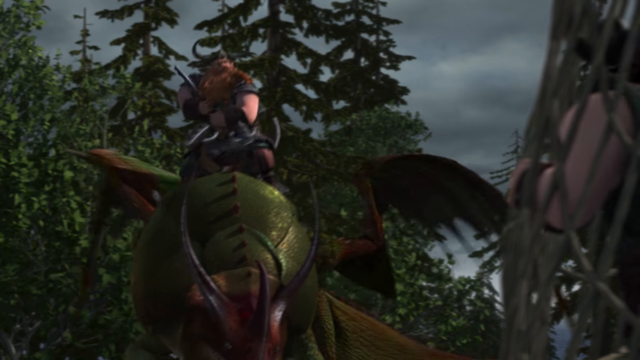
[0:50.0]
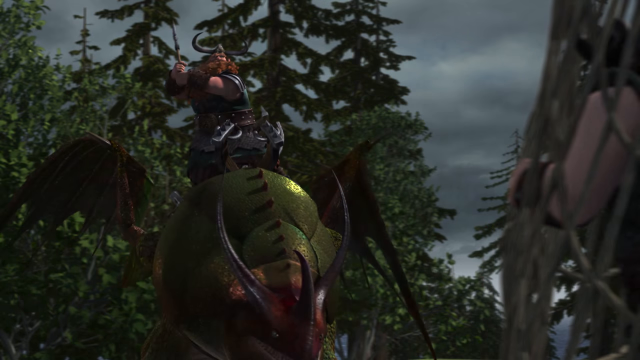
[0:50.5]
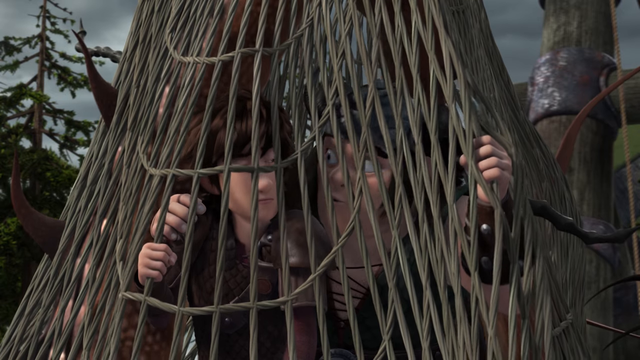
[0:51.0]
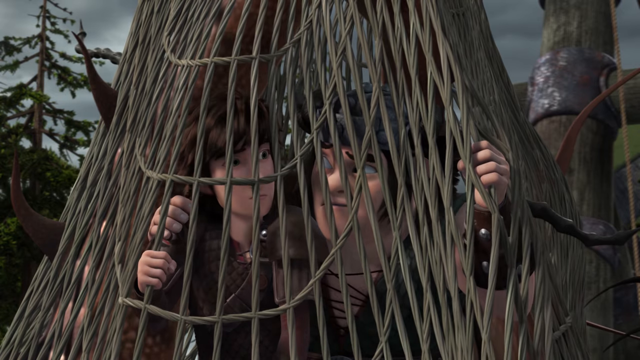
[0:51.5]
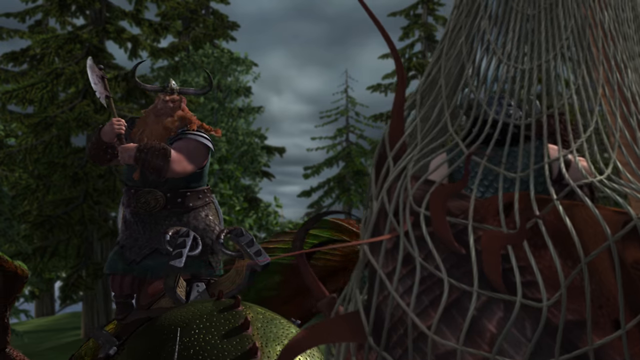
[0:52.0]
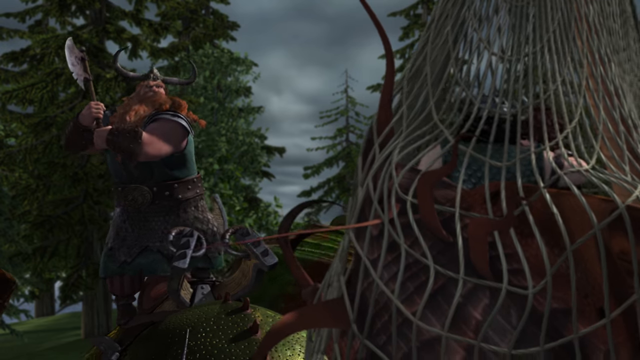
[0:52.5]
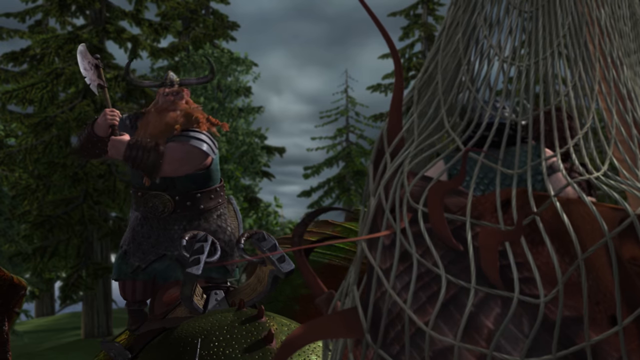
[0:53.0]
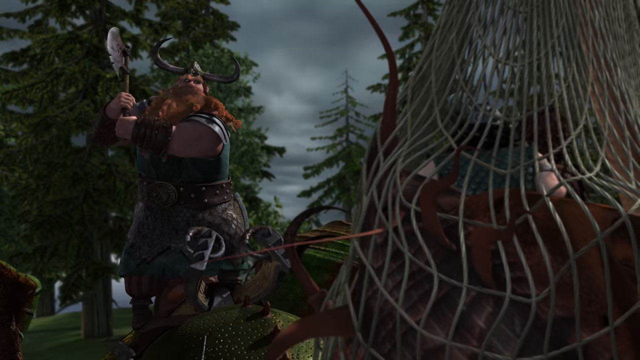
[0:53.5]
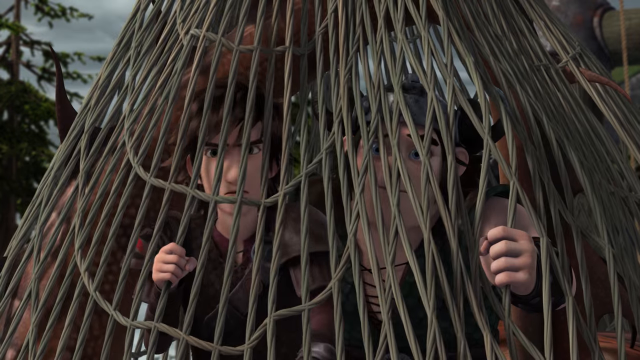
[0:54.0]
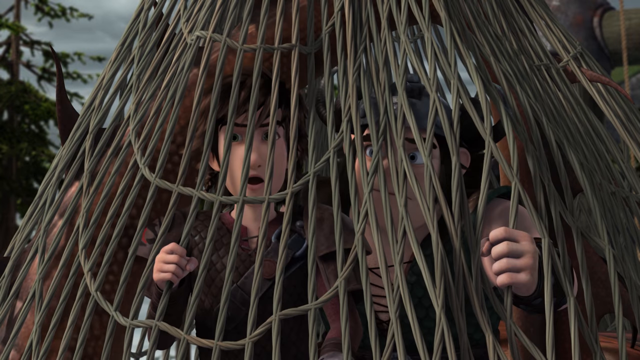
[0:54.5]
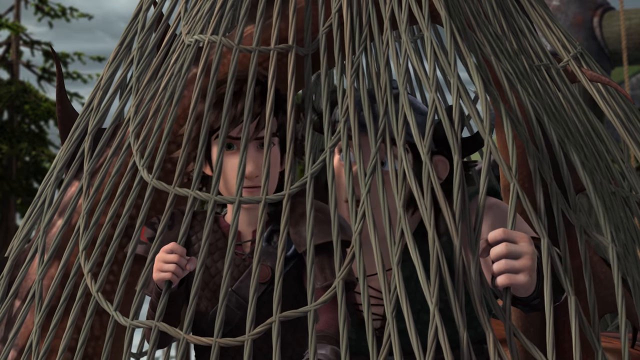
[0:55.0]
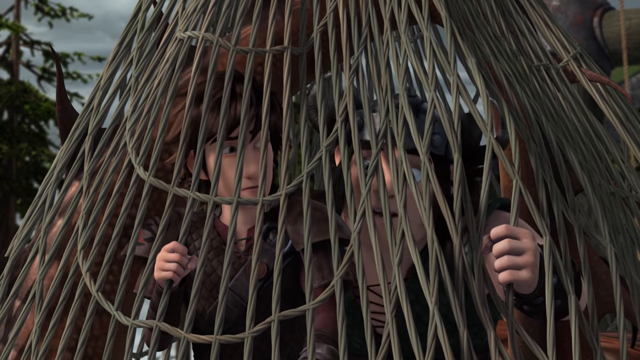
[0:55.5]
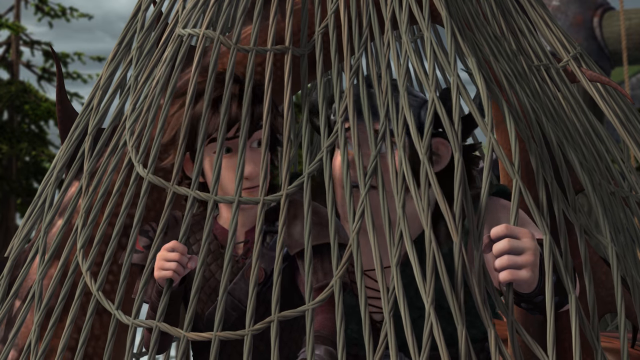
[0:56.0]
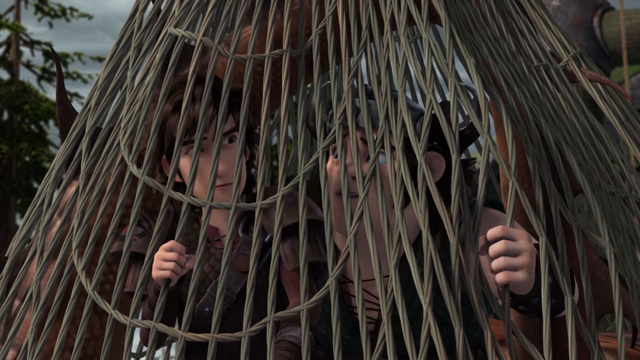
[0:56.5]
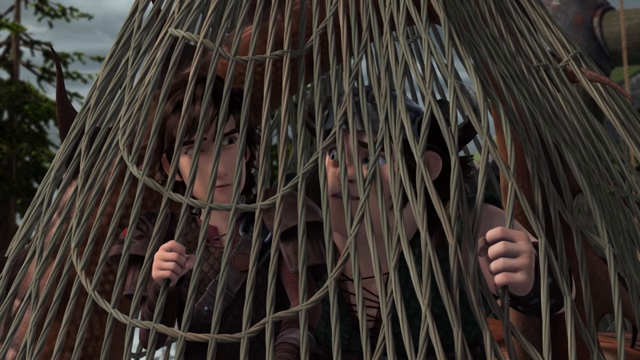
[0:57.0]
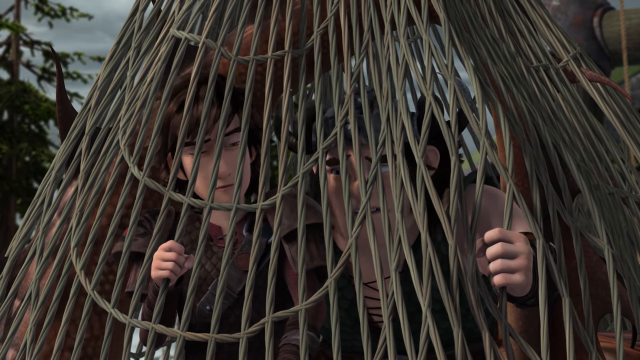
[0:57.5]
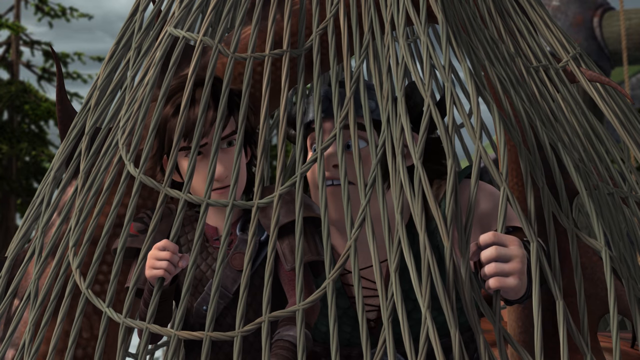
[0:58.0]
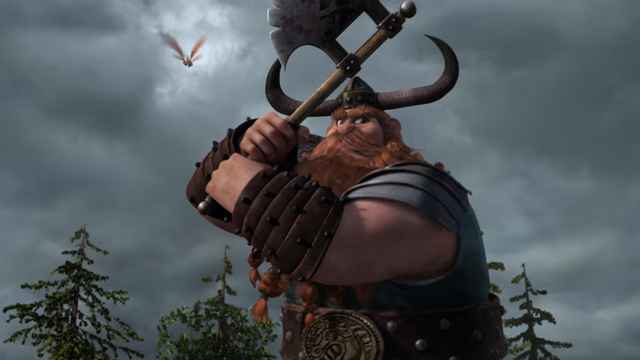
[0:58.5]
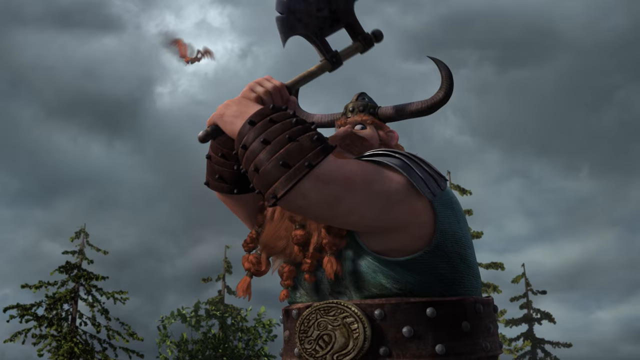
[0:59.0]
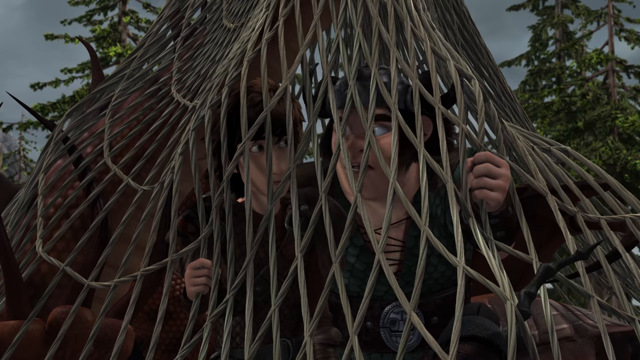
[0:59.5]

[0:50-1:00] The Viking riding the dragon has landed. The whole scene seems to take place in a wooded area, with high trees in the background. The view focuses in on the two characters in the net, who are speaking. The Viking now has an axe in his hands and is still sitting atop the dragon, while the two characters in the net speak to each other and to him. He pulls the axe back as if about to swing it, and the orange dragon can be made out in the distance, as if it is flying back to this area.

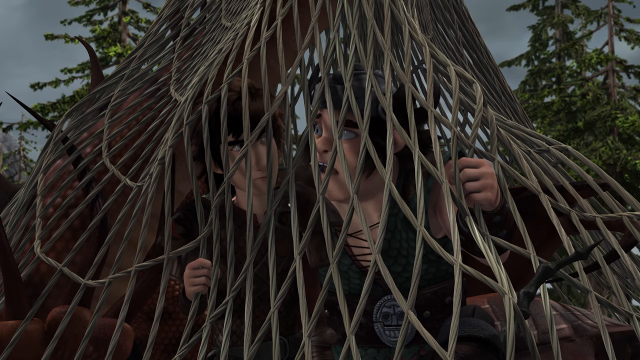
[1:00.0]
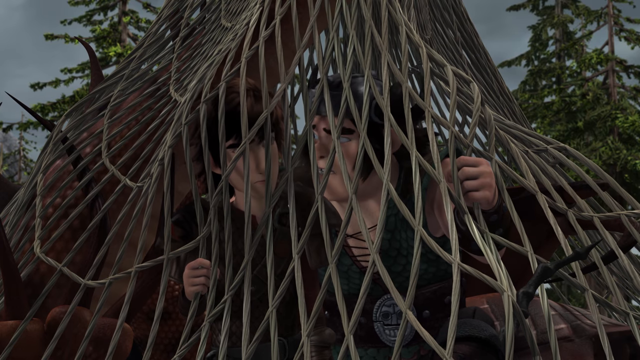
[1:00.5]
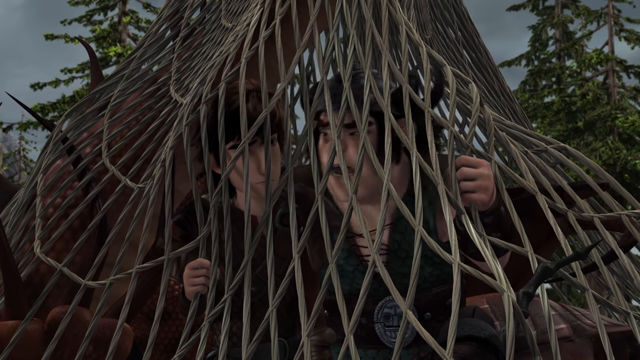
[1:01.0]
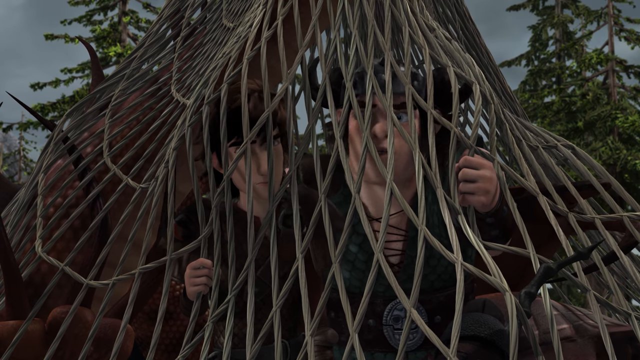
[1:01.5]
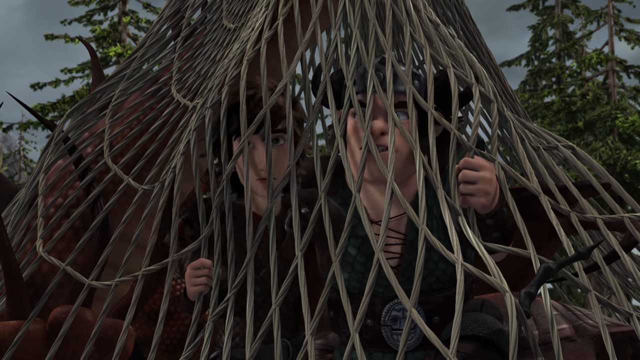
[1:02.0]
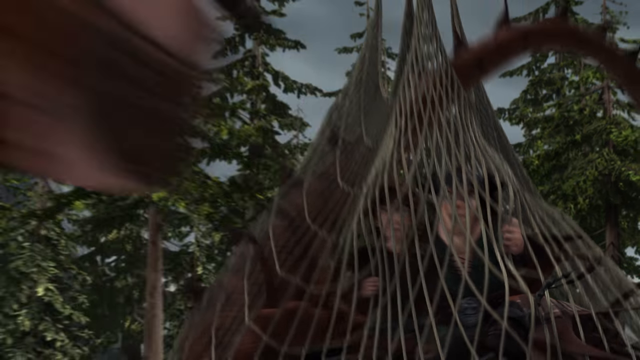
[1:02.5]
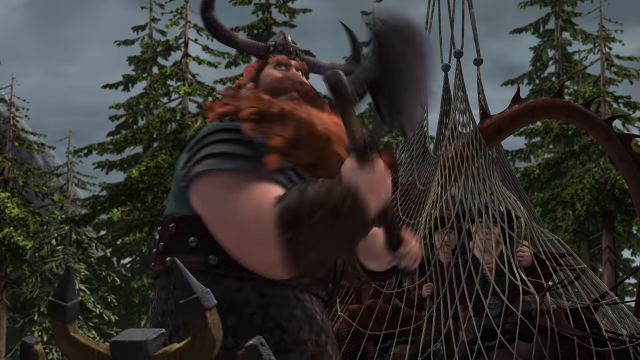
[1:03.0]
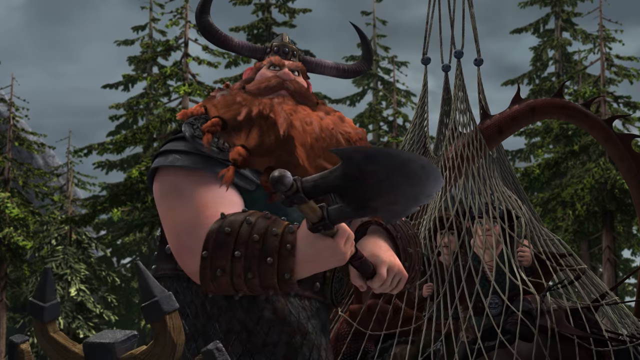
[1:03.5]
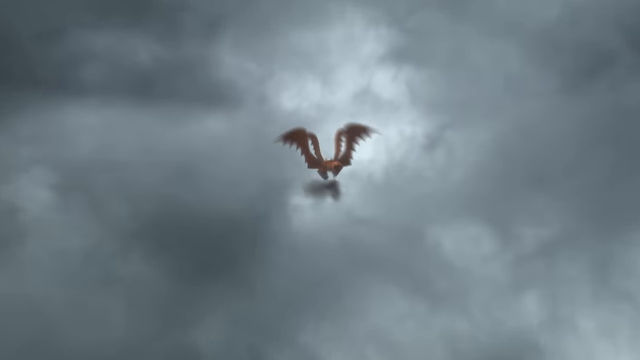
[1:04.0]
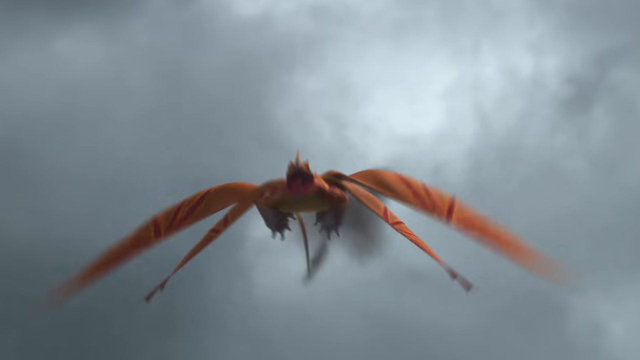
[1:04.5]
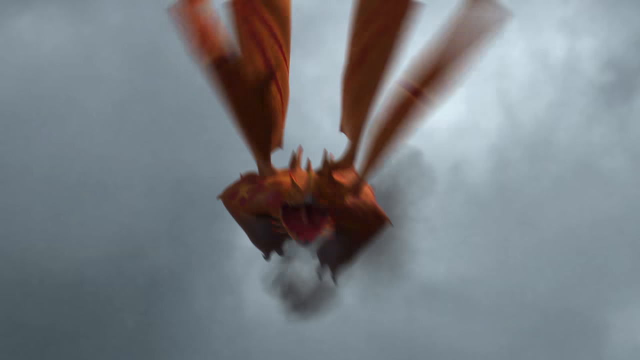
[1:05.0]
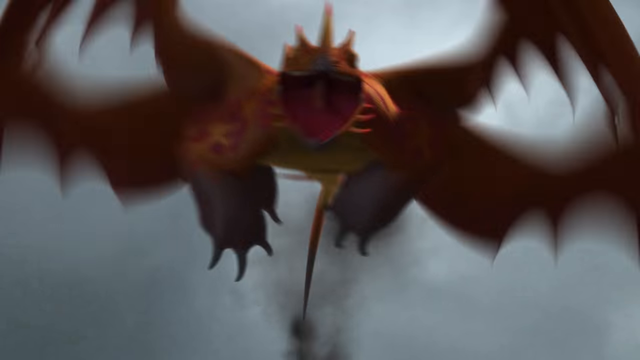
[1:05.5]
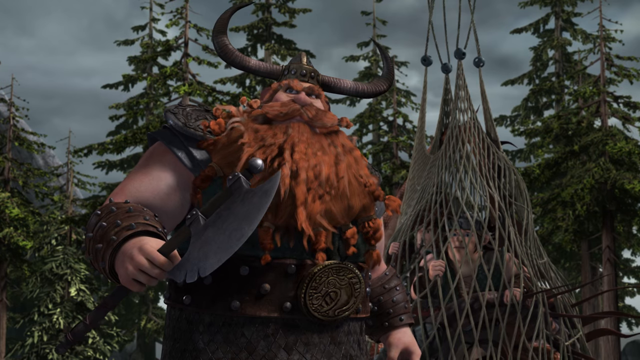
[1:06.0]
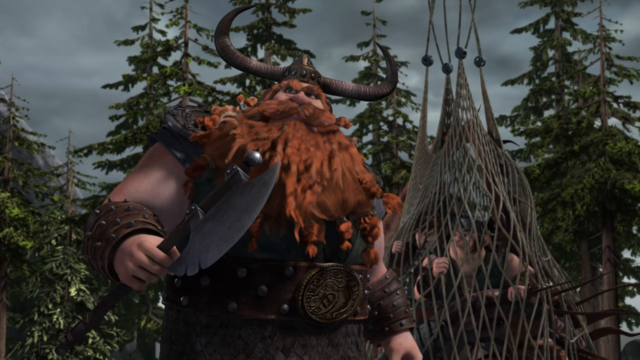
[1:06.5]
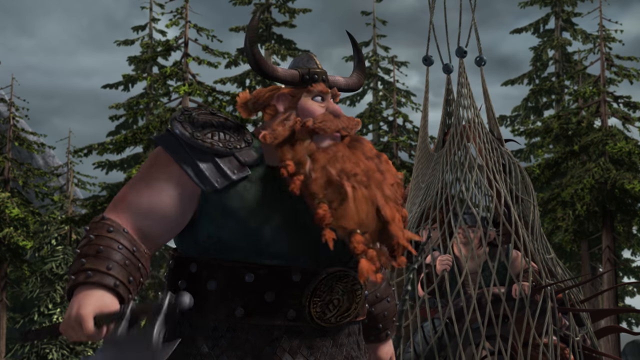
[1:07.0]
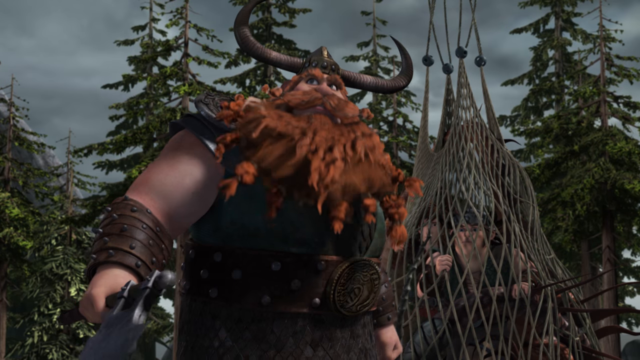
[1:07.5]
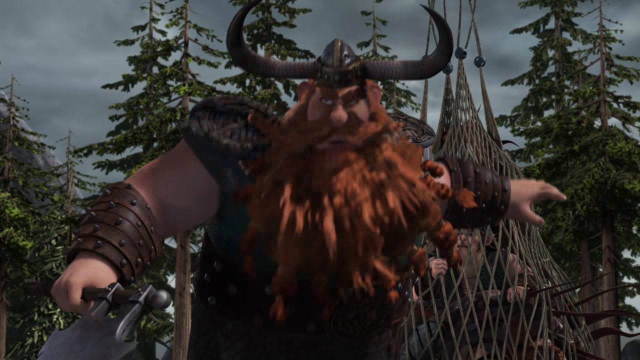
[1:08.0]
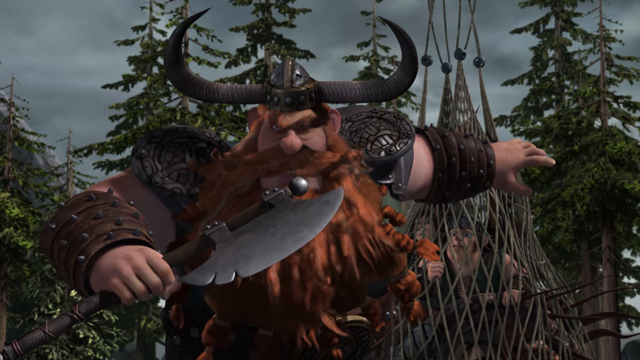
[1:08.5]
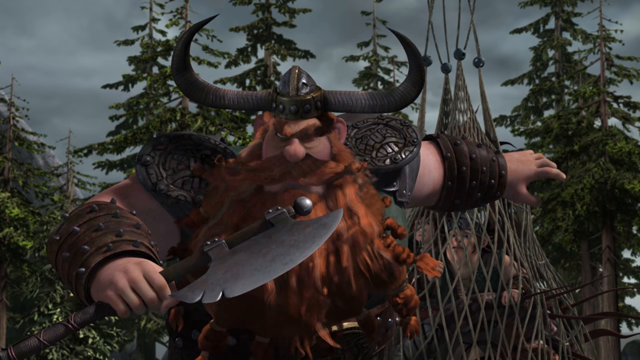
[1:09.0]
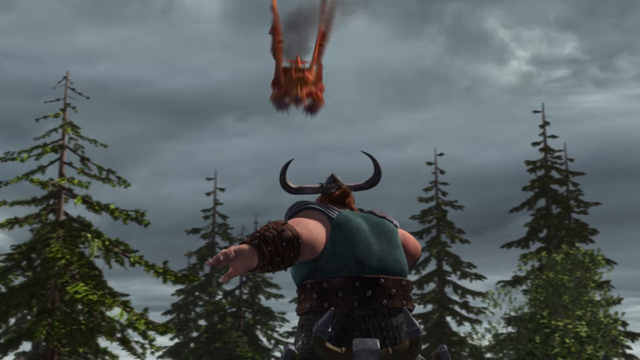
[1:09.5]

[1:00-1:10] The two people stuck in the net are hard to make out. One of them appears to be wearing a helmet; it is unclear whether the other has really thick hair or is wearing some kind of hat. The view moves out to show the red-headed Viking, who is about to swing his axe, maybe at them. He is looking up, and the orange dragon is flying toward them. The dragon is smoking as it flies down, with smoke seemingly coming from its tail, and it is kind of bobbing and weaving through the sky as it descends toward the Viking on the ground and the two men suspended in the net.